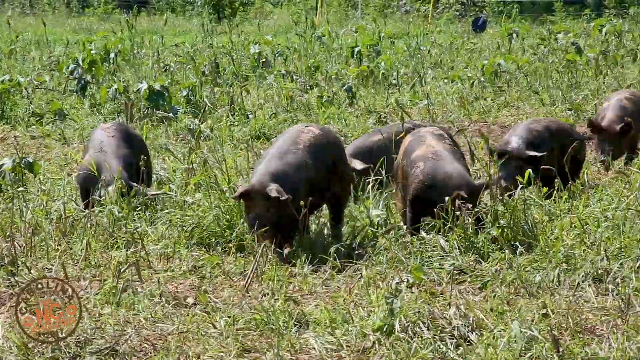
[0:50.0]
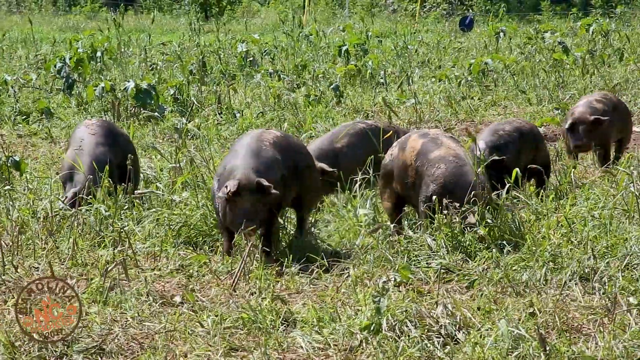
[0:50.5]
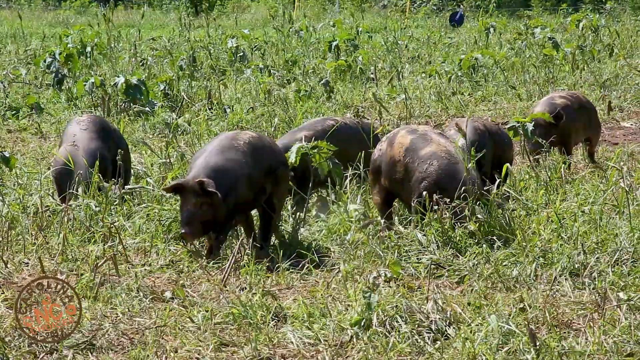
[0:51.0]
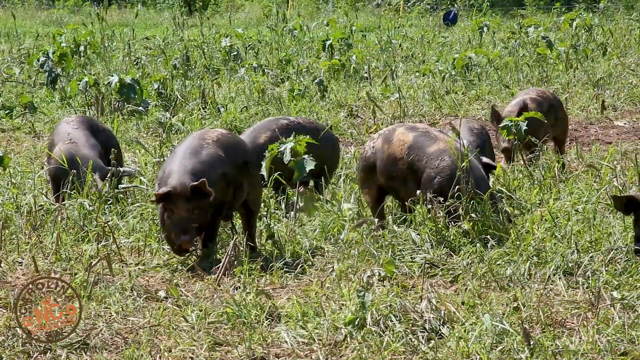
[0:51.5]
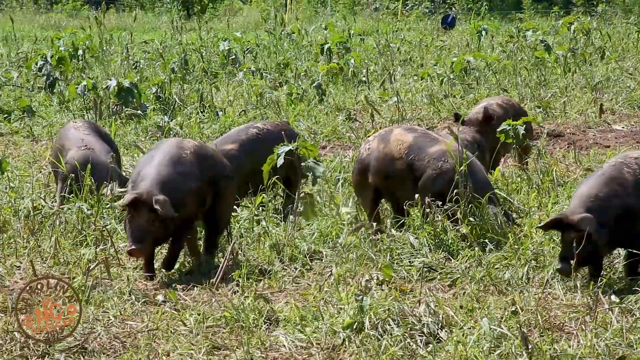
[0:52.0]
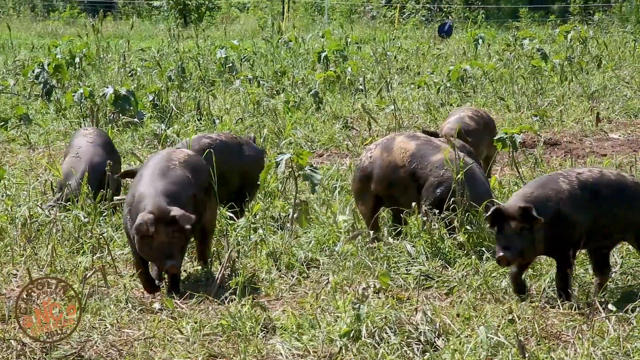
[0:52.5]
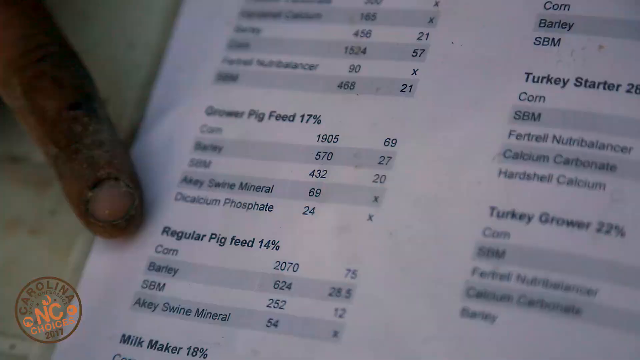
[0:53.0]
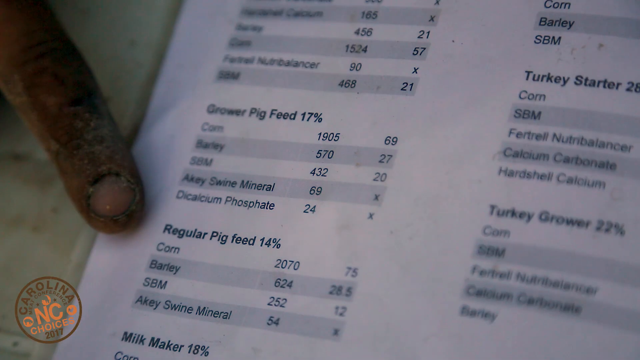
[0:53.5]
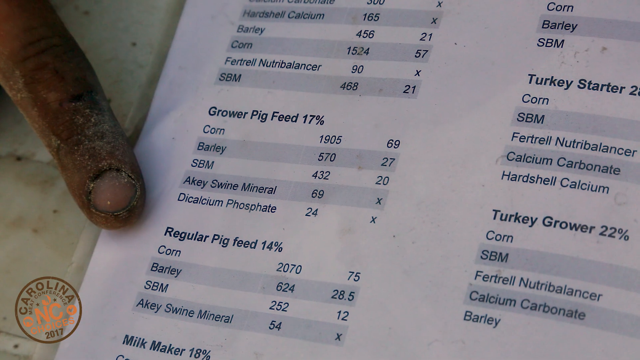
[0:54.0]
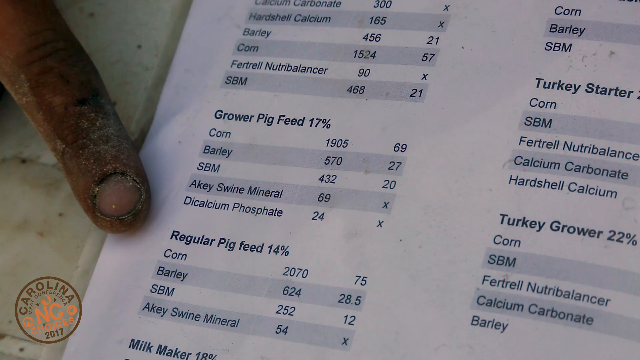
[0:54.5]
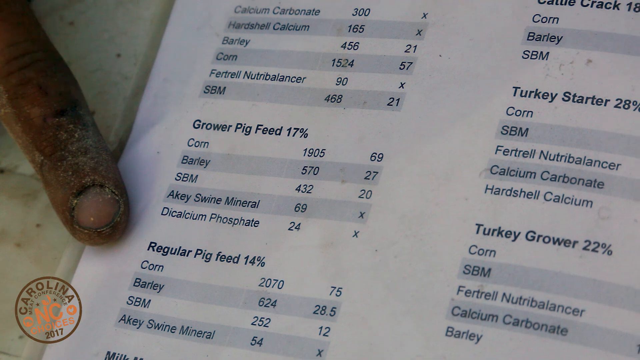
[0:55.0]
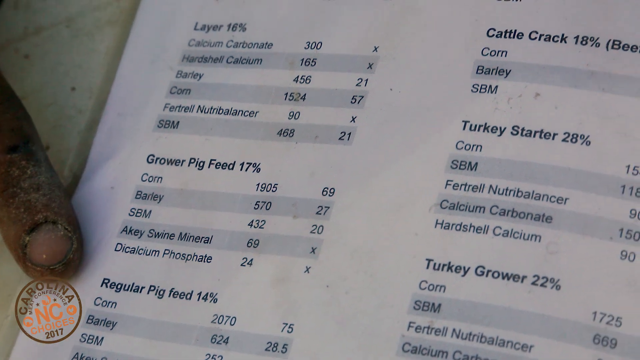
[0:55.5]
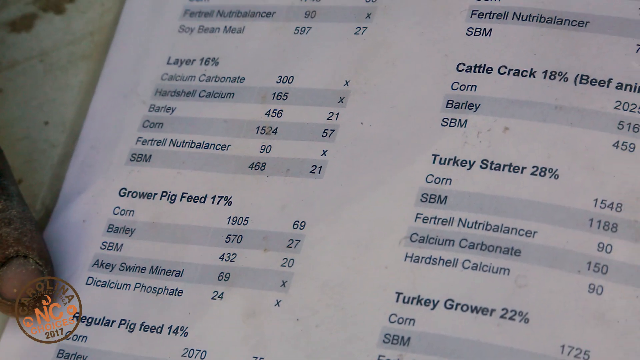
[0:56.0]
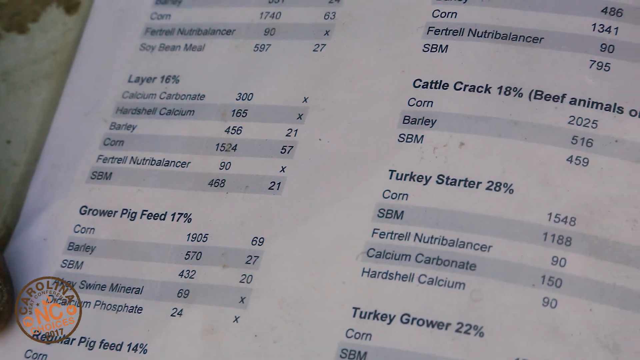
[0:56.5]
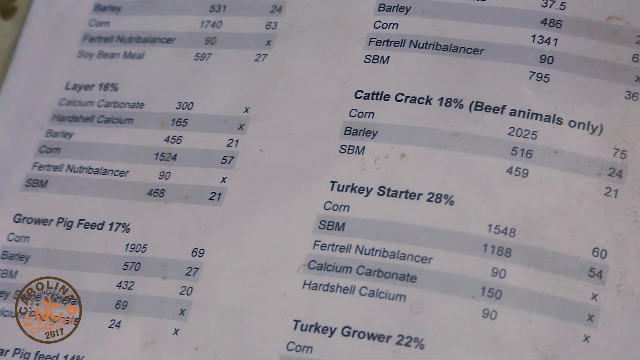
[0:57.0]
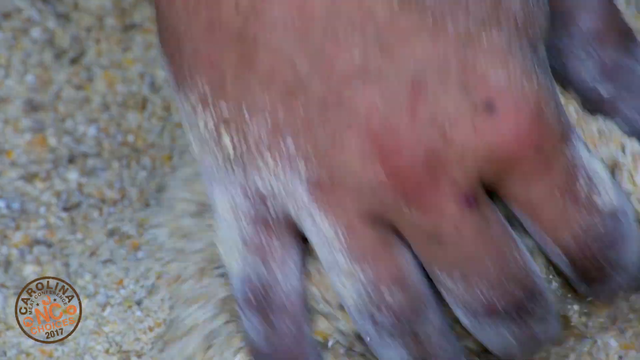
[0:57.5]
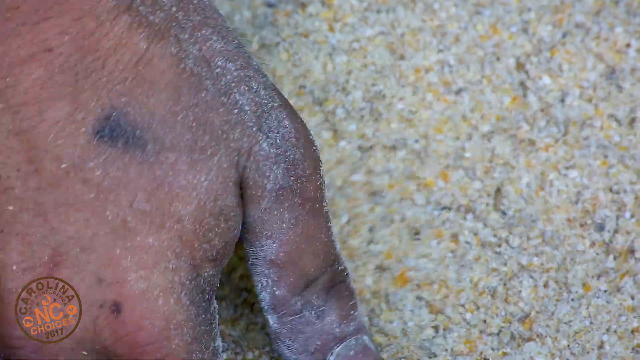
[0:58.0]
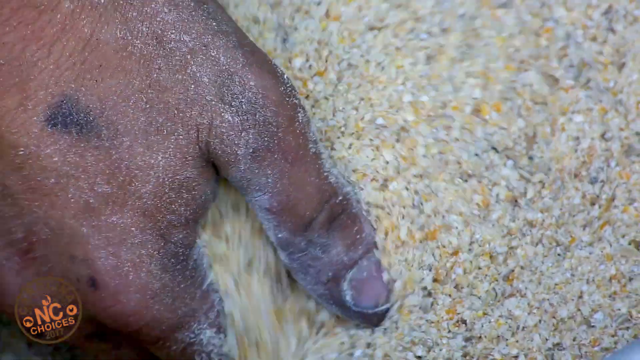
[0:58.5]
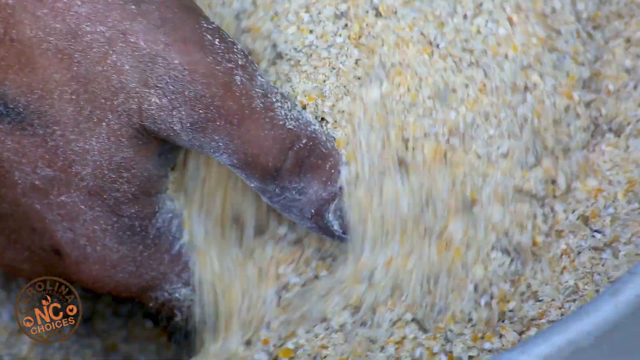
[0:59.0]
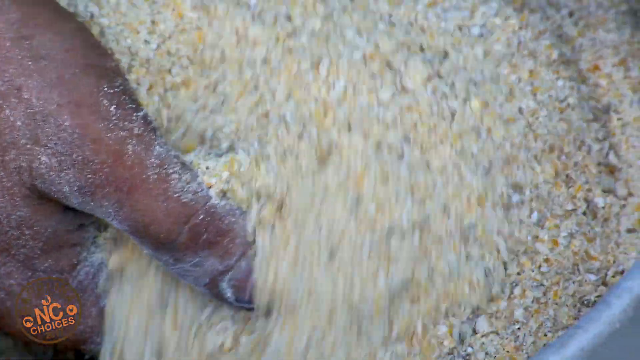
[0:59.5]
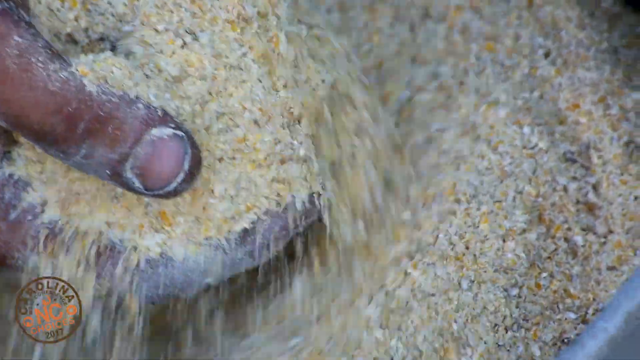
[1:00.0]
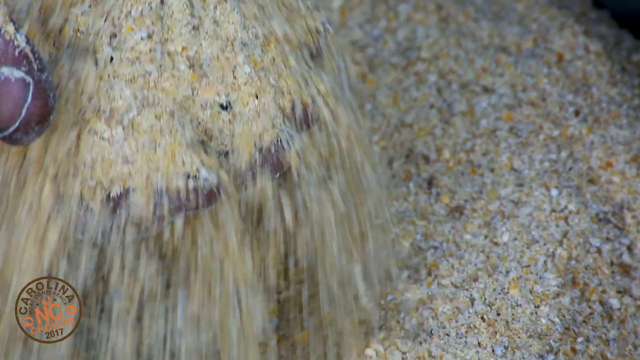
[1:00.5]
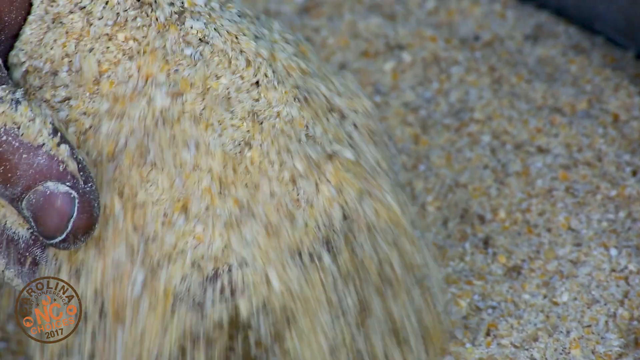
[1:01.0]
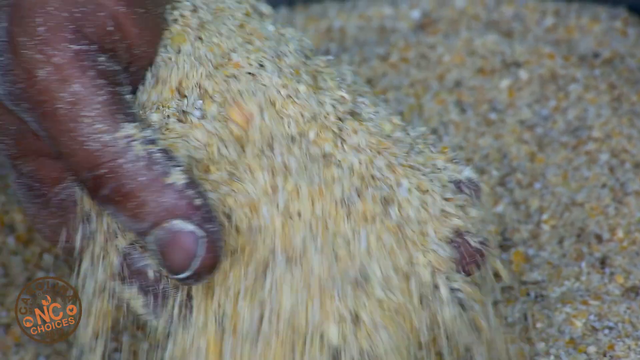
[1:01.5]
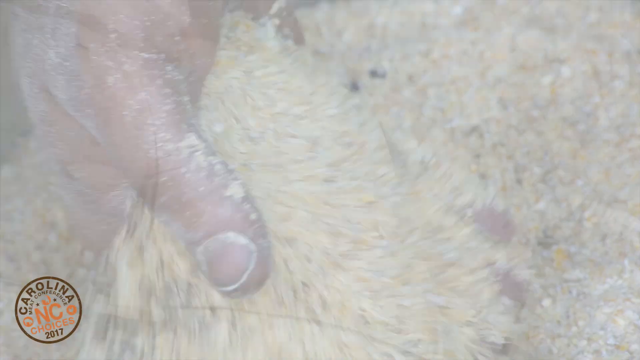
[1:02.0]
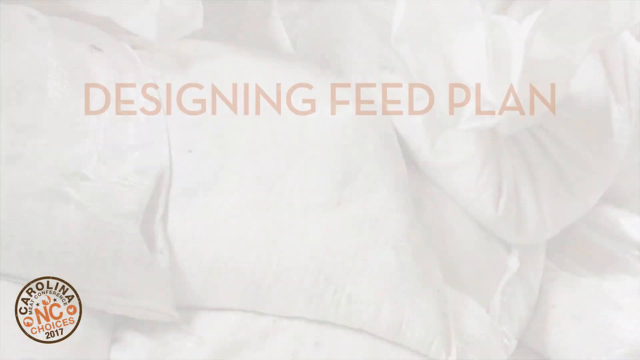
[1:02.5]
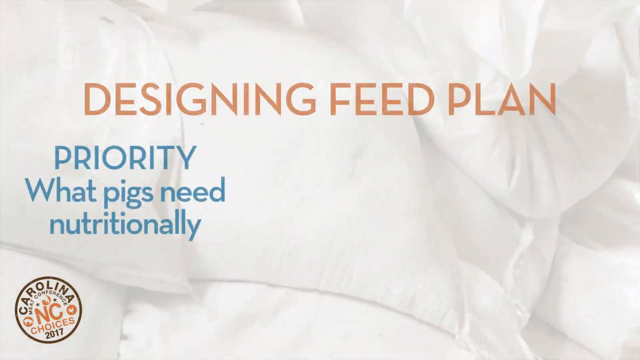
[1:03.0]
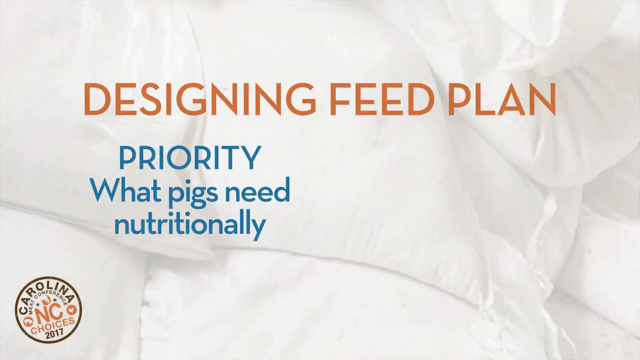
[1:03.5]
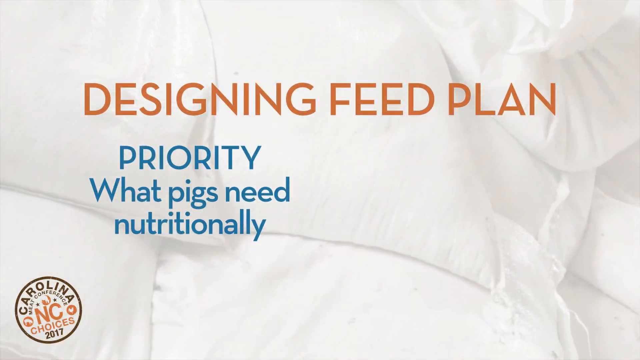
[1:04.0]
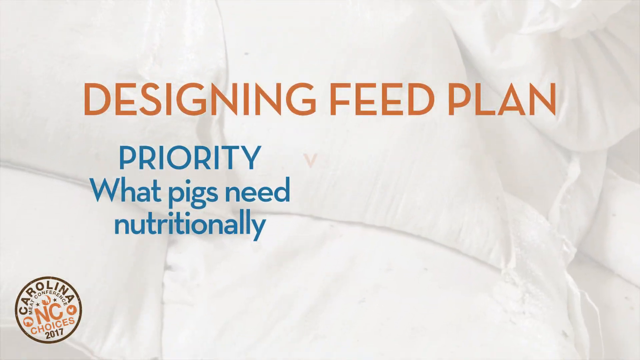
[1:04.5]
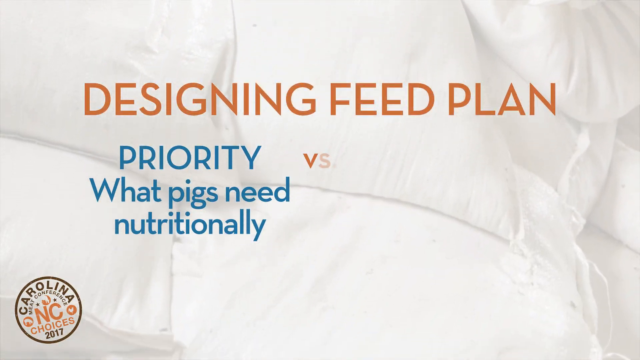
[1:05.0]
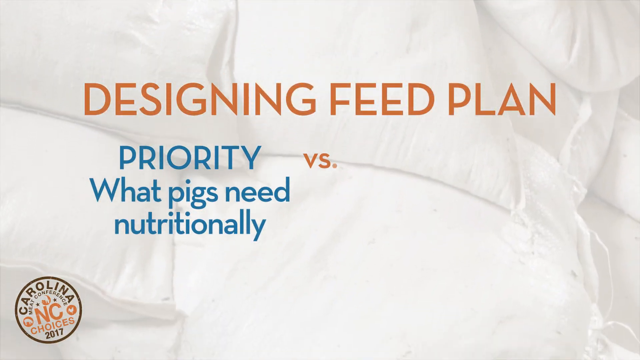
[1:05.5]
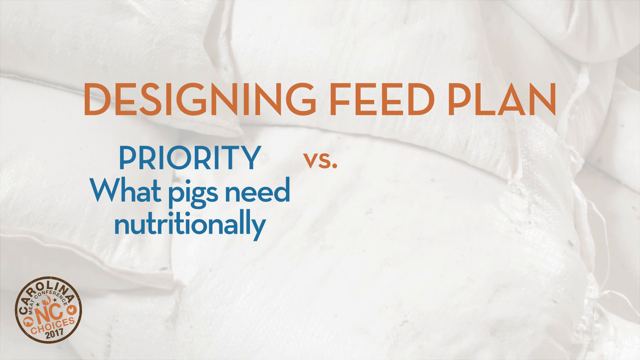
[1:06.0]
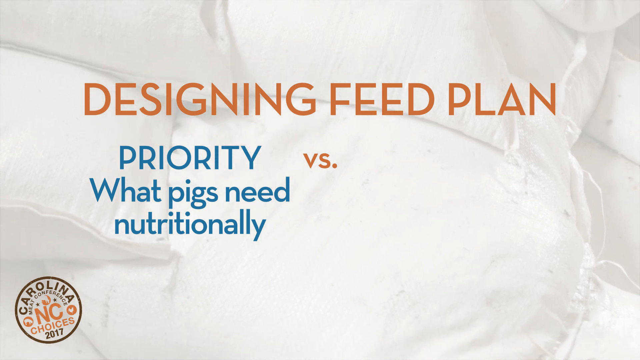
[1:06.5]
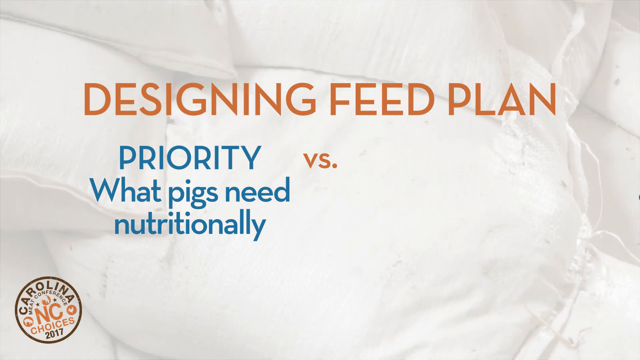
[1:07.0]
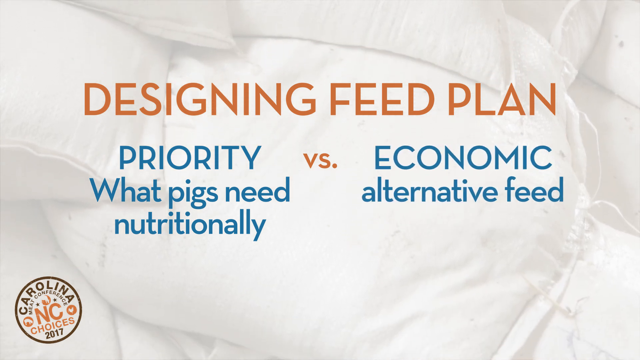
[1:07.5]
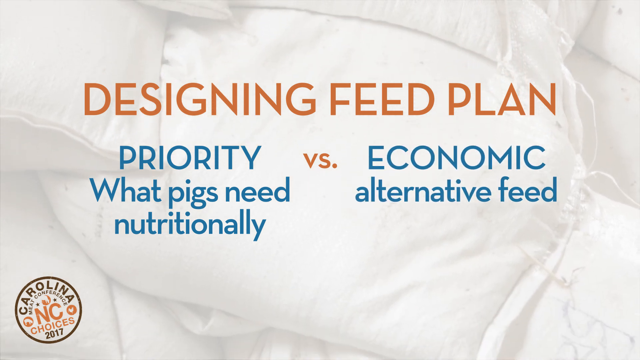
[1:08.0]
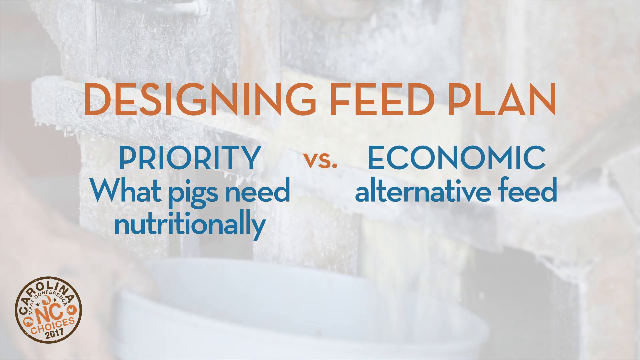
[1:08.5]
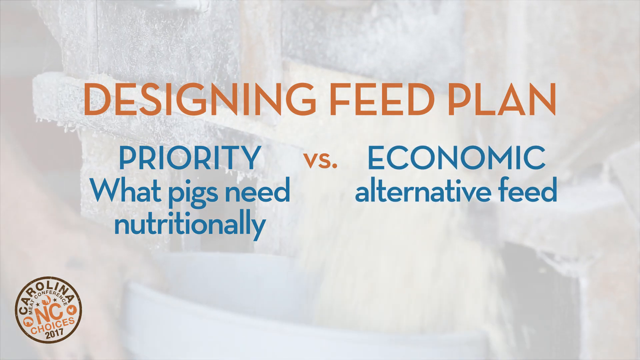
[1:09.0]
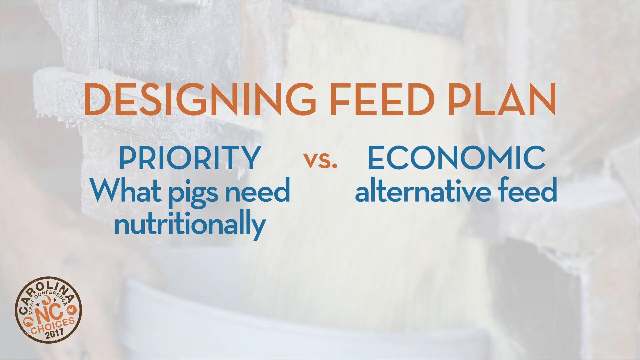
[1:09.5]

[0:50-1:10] About six dark black pigs, maybe, are in a field of brush and grass. They have their snouts to the ground as if trying to root out some food, and then they start walking forward at a fast clip. It then transitions to a man holding a laminated piece of paper that lists grower pig feed, regular pig feed, apparently turkey starter, and the calories of feeds like corn and barley. He points with his brown finger to regular pig feed, 14%. Corn apparently has 2,070 calories and 75 of something that is not legible. The camera kind of pans over, and "cattle crack 18%" is visible. Then a man's brown hand is in a bunch of corn that apparently has been milled. He moves it around, back and forth in a circular motion, then picks some up in his hand, kind of shows it and shakes it out. It then goes to a screen that says "designing feed plan."